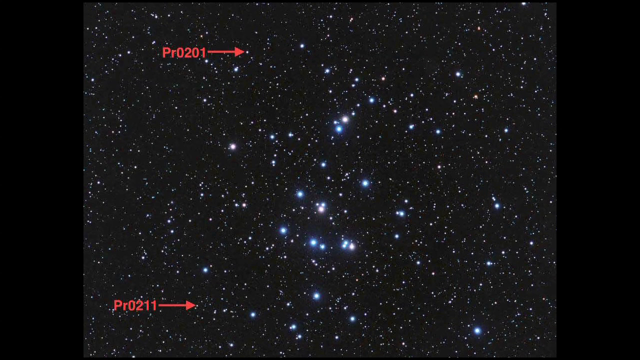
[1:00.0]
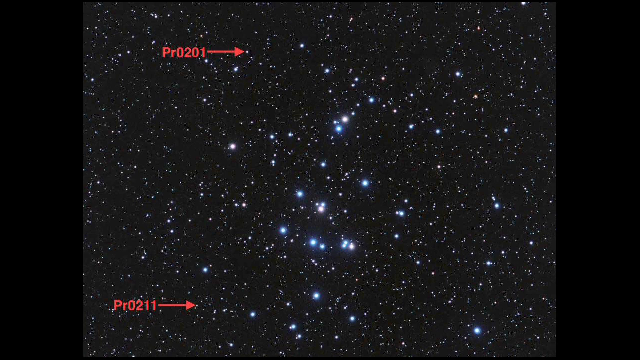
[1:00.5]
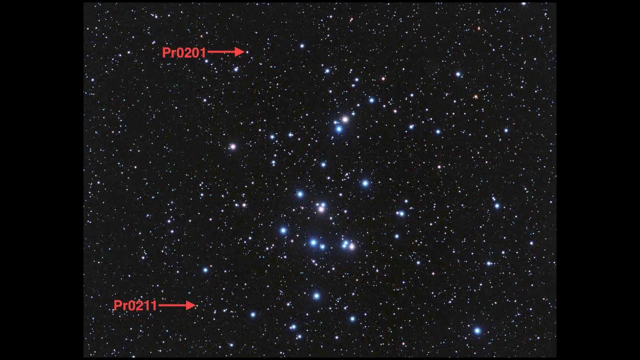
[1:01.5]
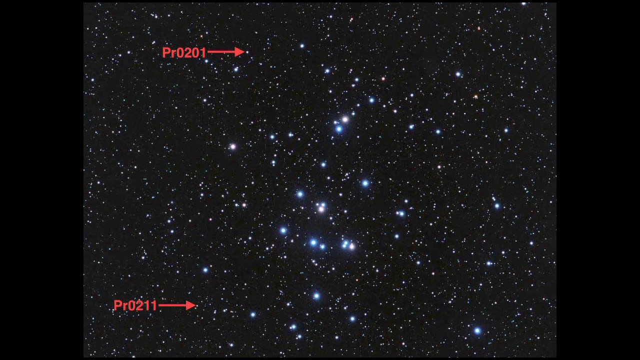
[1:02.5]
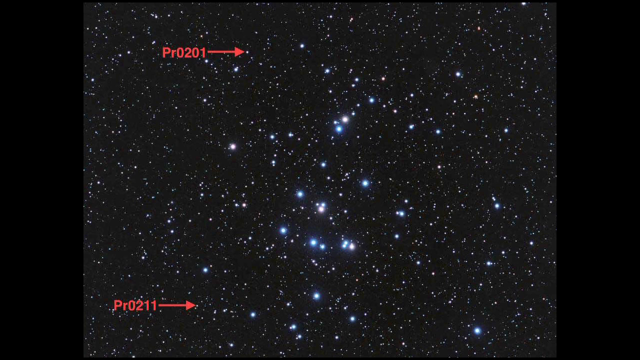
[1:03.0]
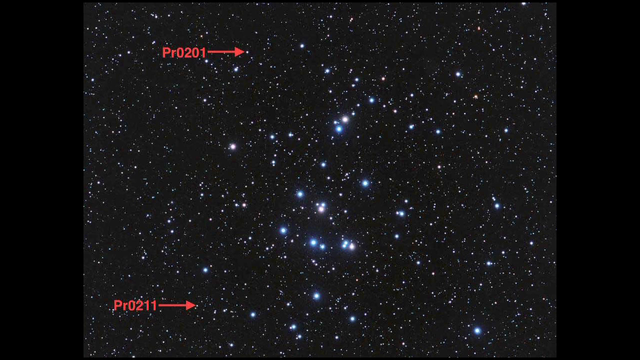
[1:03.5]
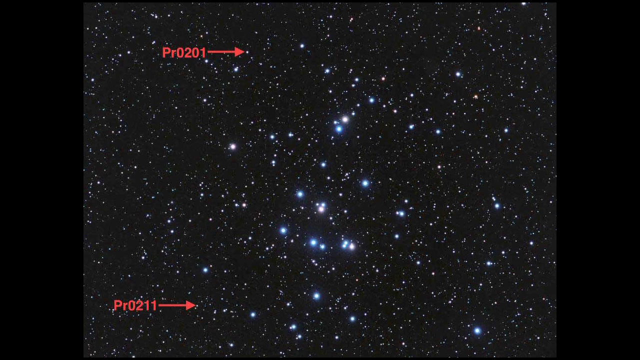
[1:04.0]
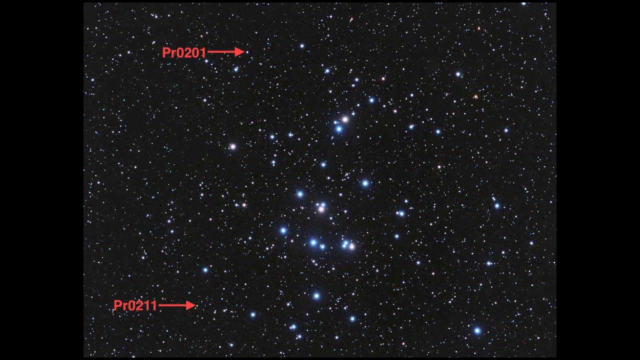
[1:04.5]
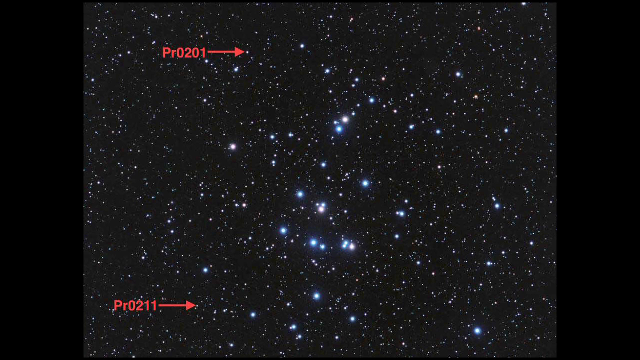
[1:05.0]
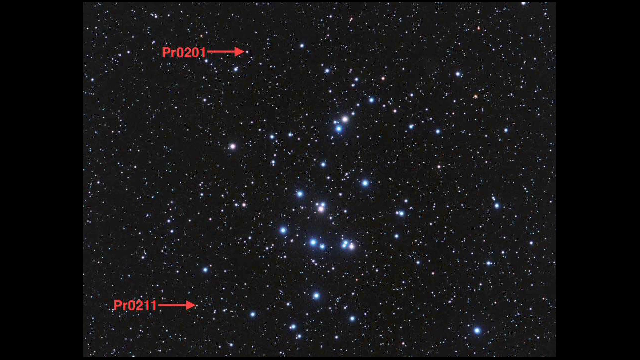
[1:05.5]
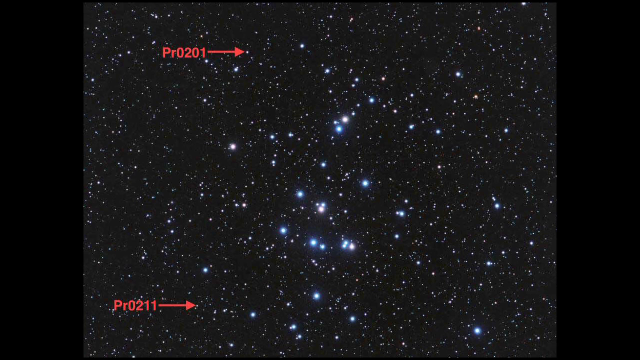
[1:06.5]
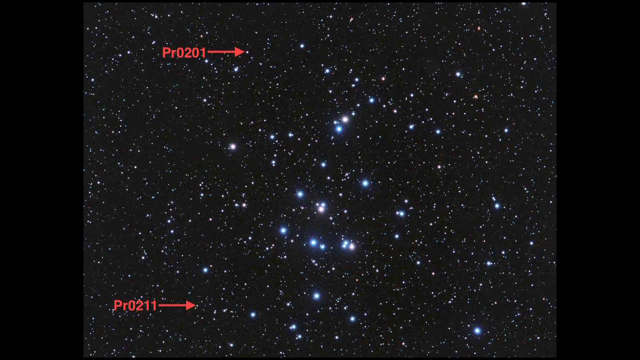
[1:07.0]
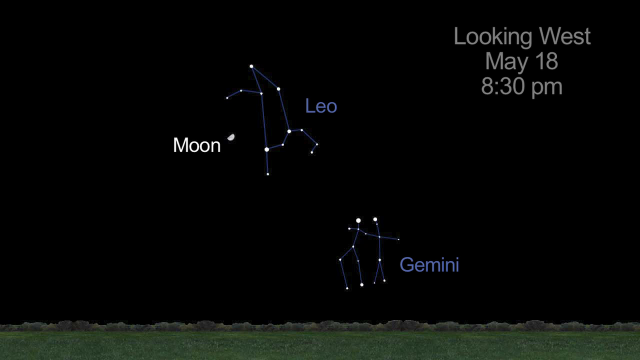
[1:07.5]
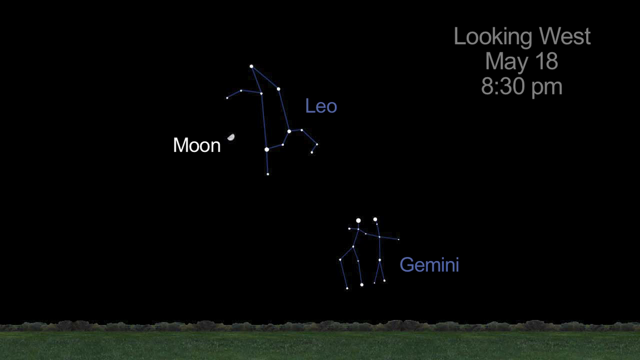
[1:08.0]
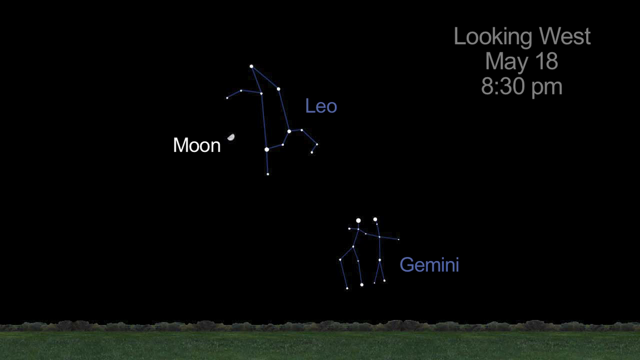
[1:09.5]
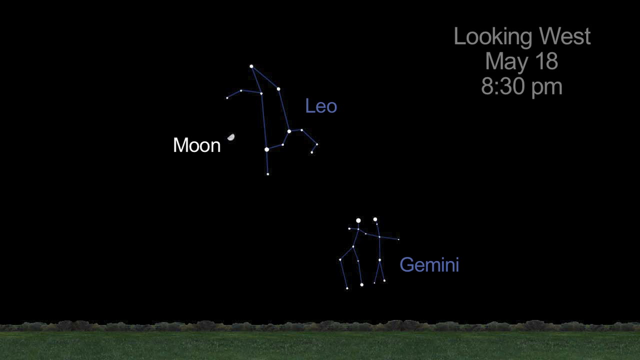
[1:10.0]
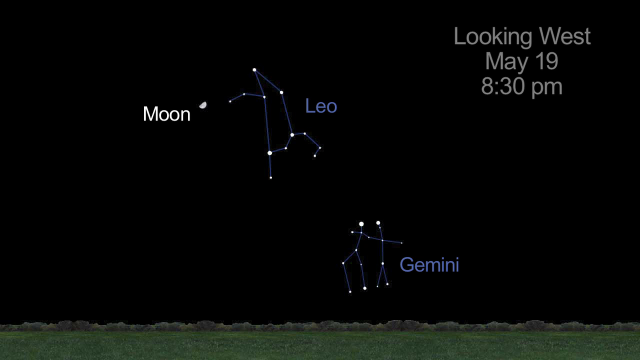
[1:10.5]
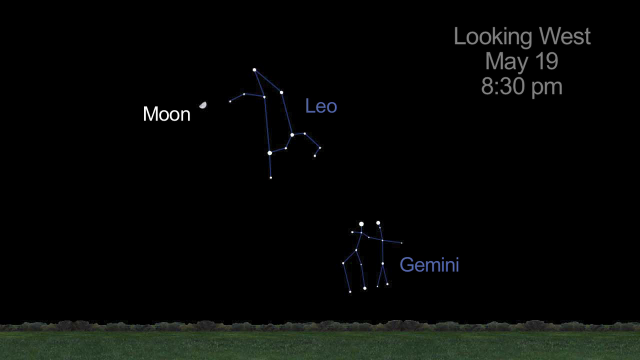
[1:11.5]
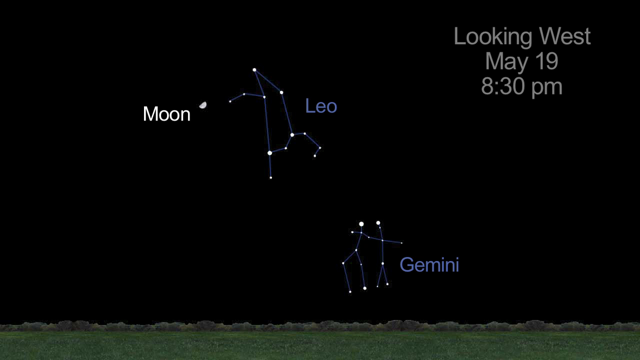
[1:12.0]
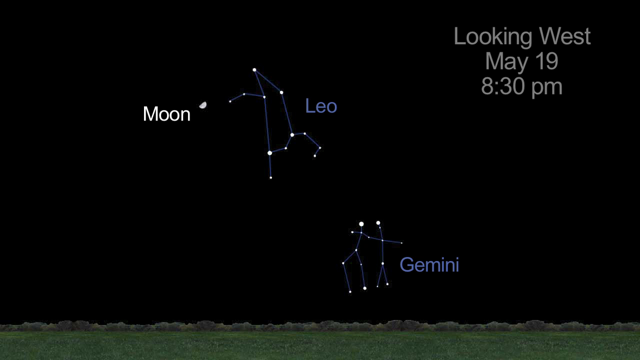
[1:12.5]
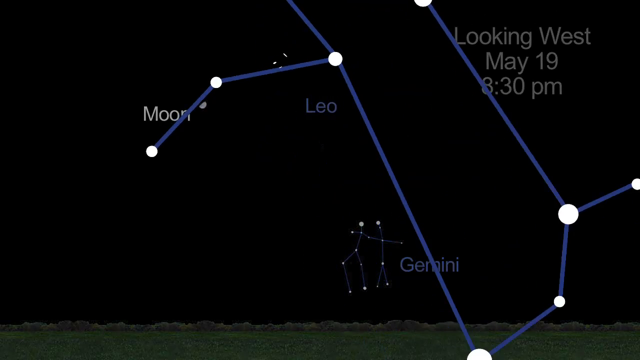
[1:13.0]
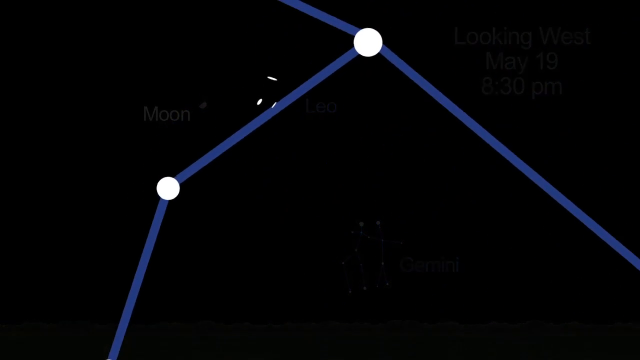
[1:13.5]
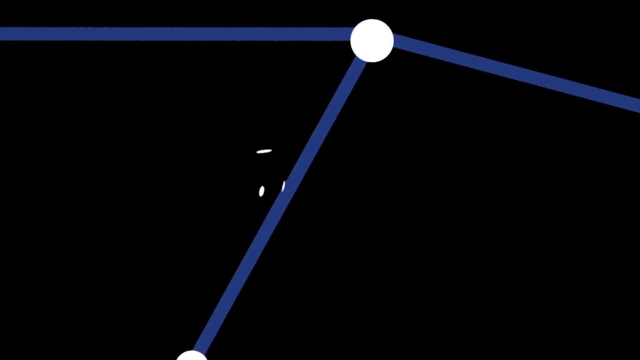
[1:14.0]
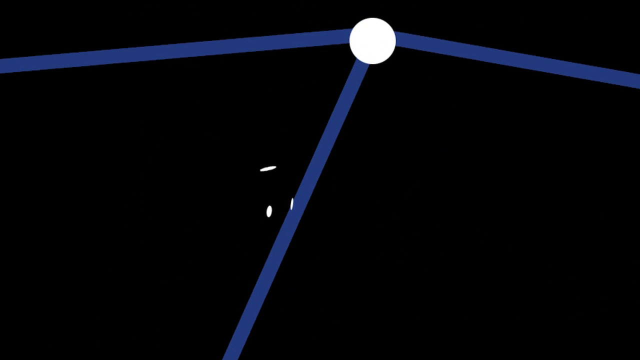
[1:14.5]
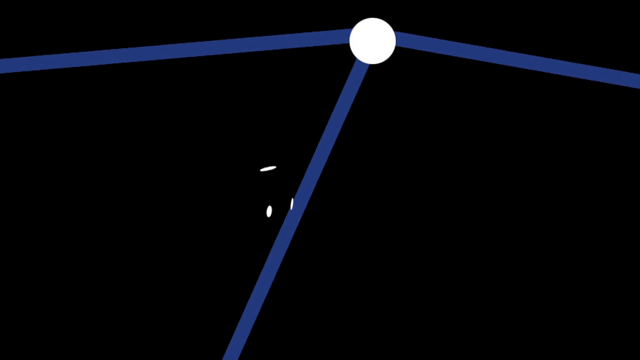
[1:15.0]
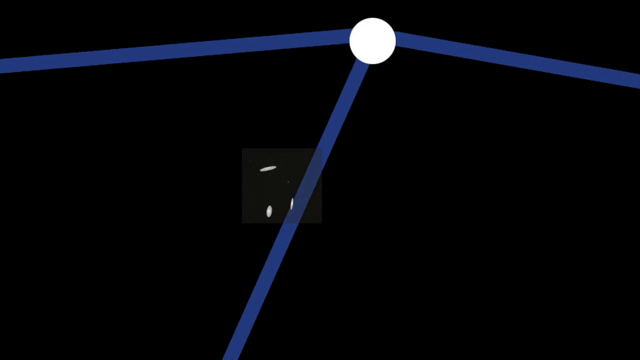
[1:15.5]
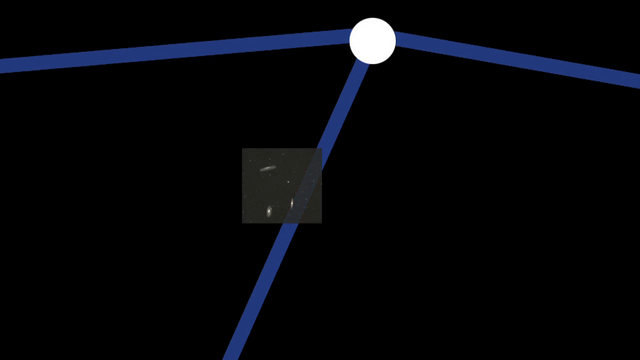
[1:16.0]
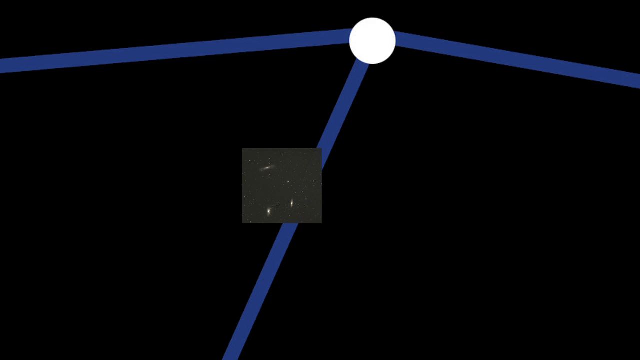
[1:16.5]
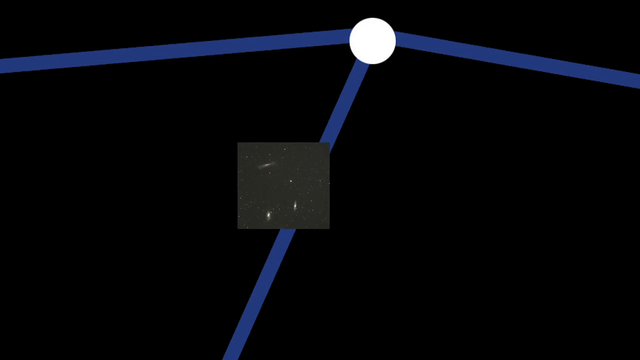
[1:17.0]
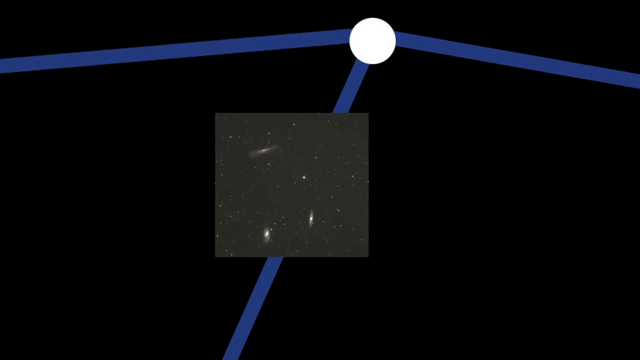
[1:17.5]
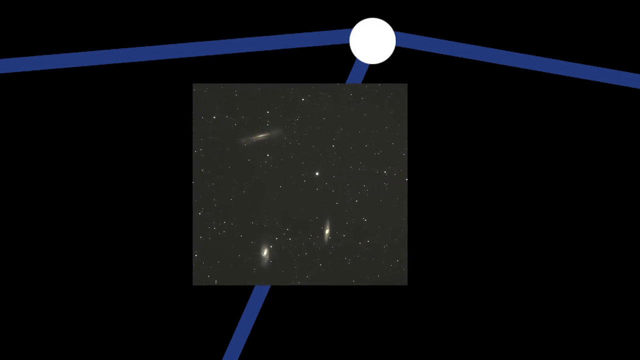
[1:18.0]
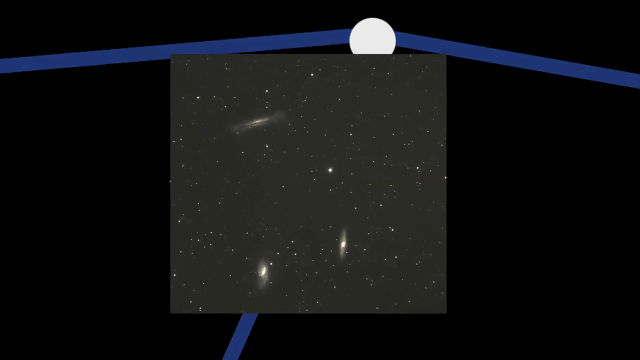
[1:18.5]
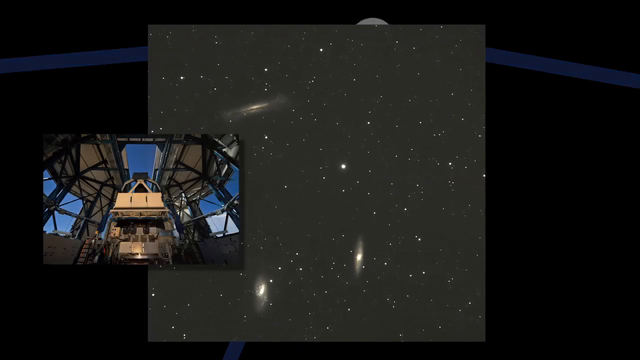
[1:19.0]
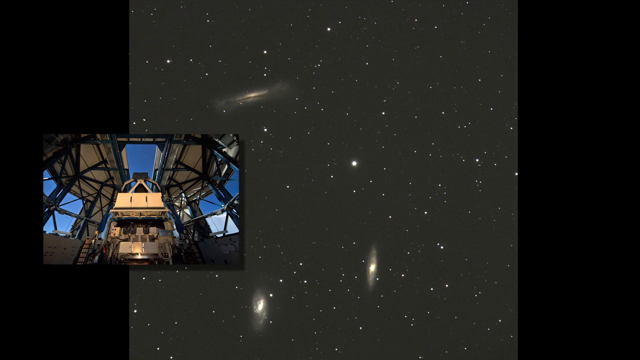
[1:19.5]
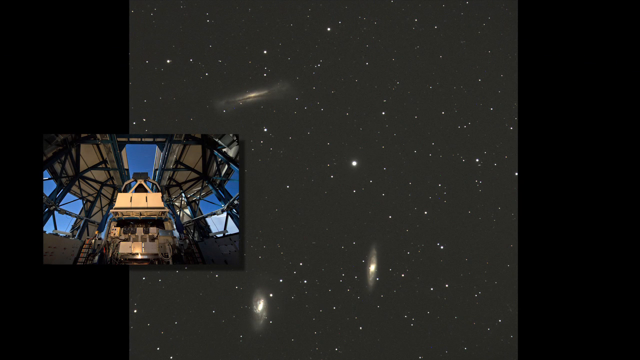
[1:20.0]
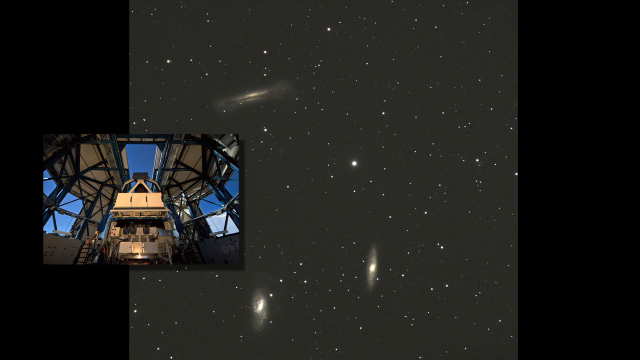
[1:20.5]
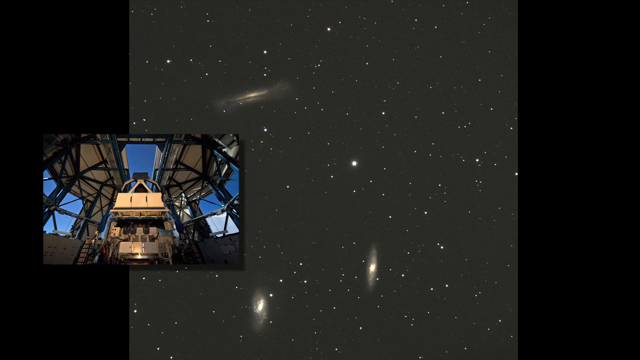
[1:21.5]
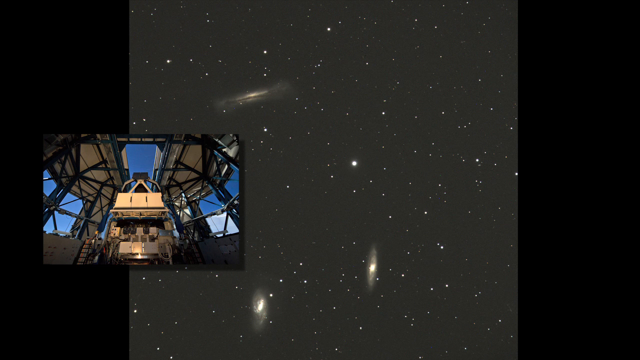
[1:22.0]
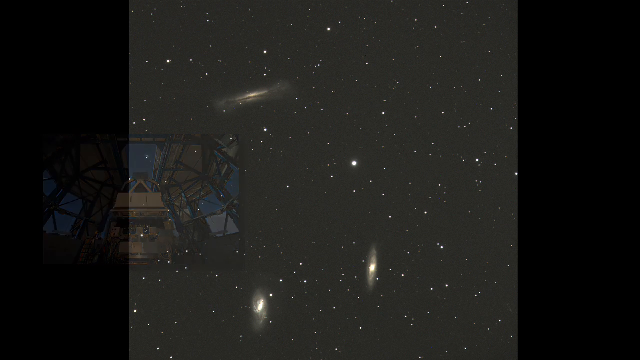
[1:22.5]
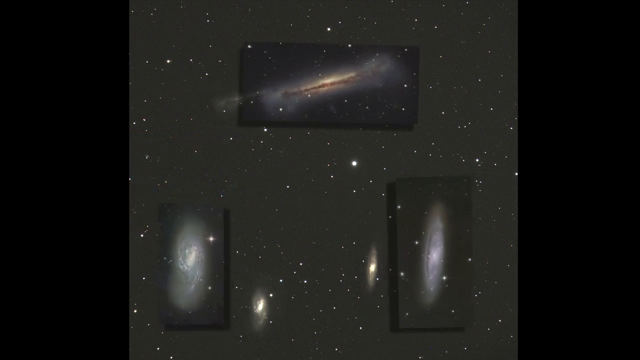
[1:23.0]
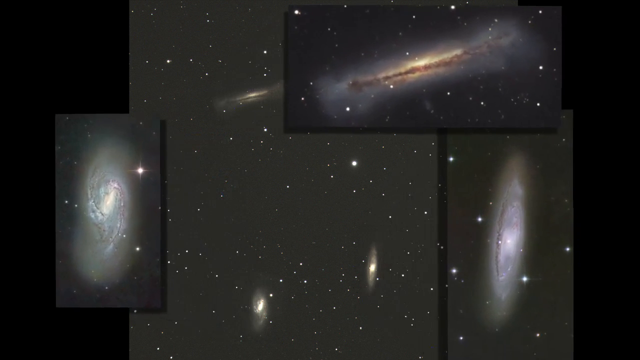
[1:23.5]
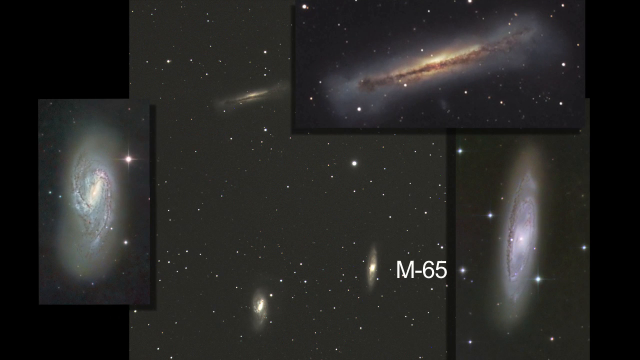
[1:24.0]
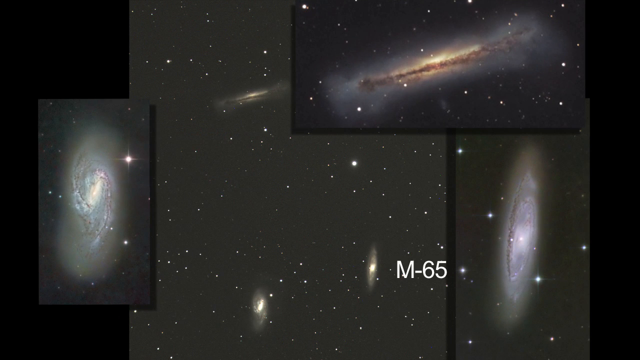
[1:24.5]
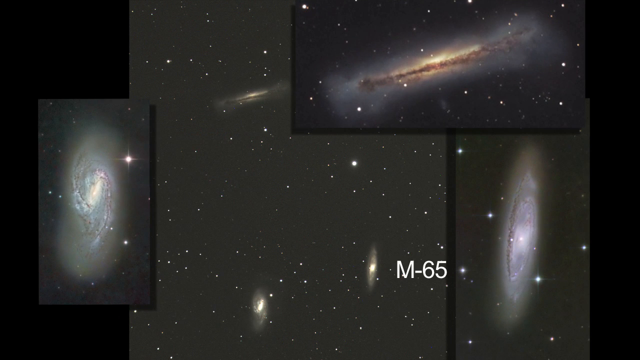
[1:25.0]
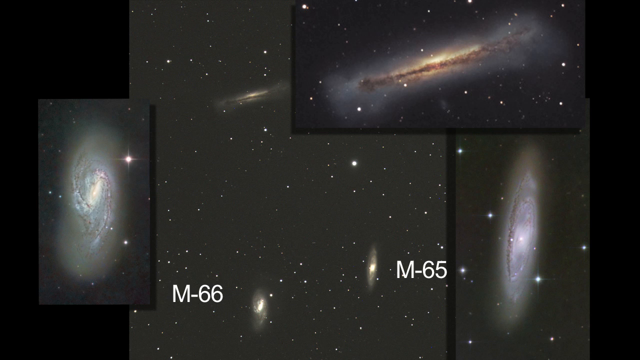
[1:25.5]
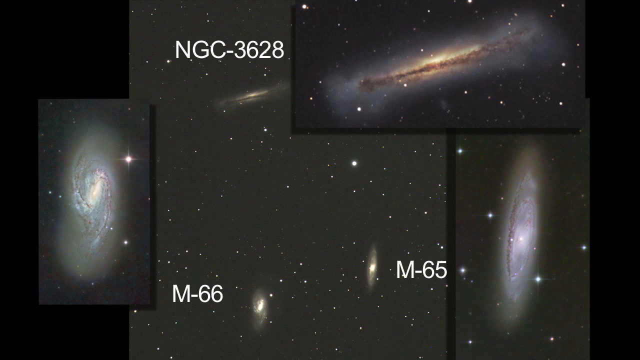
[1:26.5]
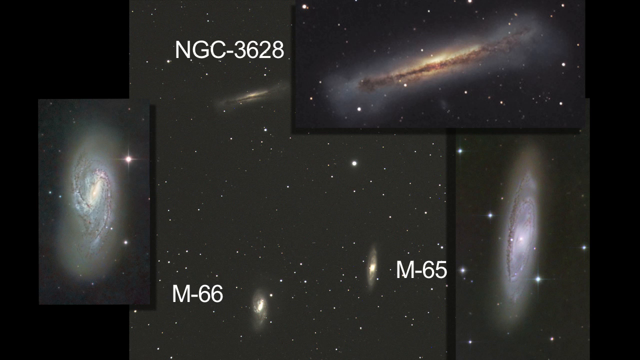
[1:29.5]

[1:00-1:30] A large star cluster with some faint and some bright stars appears, with red letters and numbers at the left of the screen. At the top left, "PR0201" has a red arrow pointing to the right at one of the stars; at the bottom left, "PR0211" has an arrow pointing to the right toward another star. The scene changes to two constellations, Leo and Gemini. To the left of Leo is a picture of close to a half moon with the word "moon" in white text next to it. At the top right, text reads "Looking West, May 18, 830 p.m." The constellation Gemini looks sort of like two people holding hands. The video zooms in to a cluster of what appear to be stars and galaxies, and to the left is an image of a large telescope.